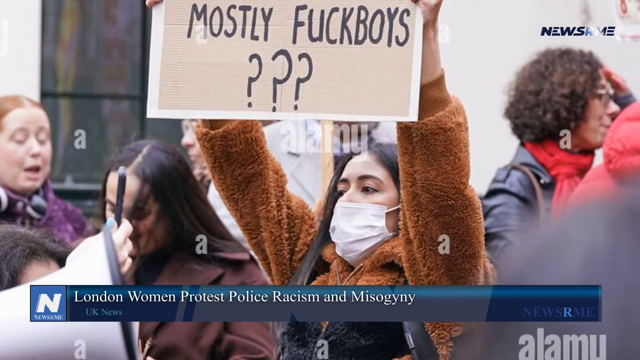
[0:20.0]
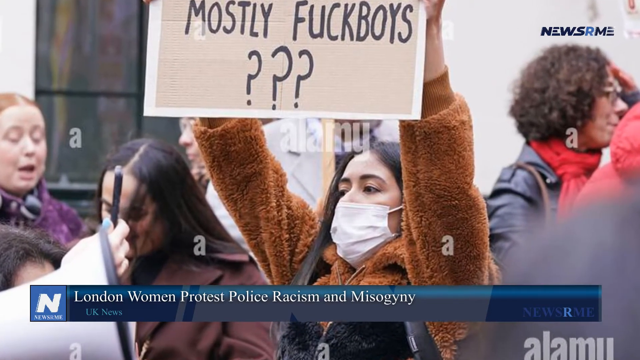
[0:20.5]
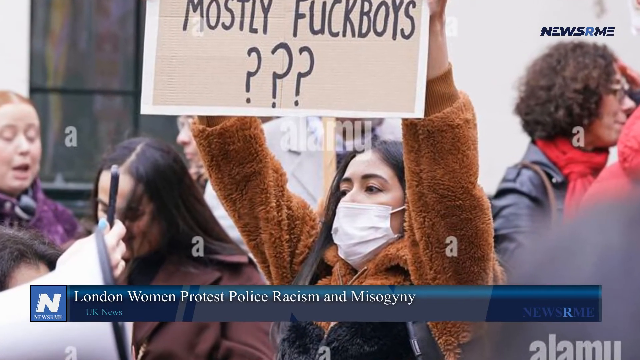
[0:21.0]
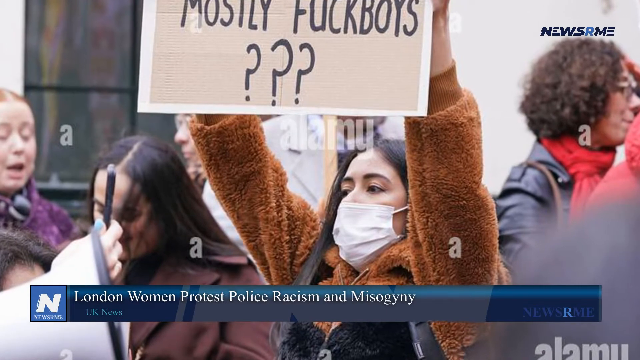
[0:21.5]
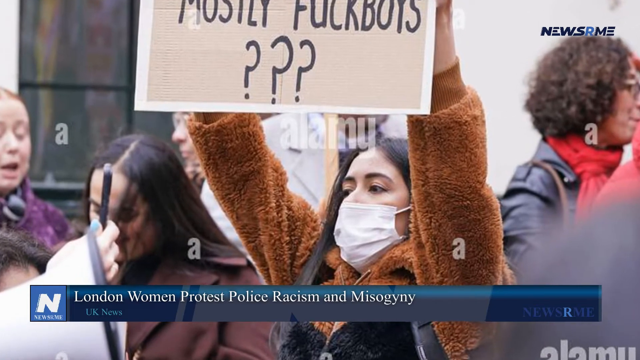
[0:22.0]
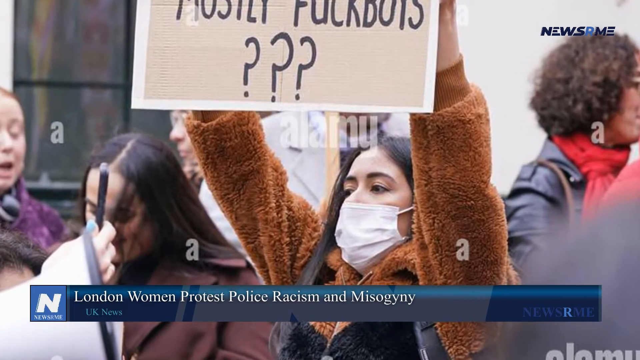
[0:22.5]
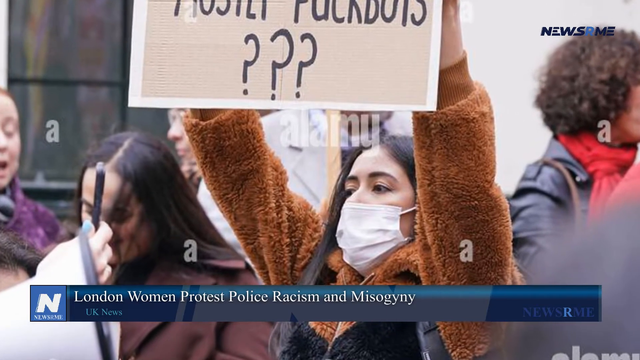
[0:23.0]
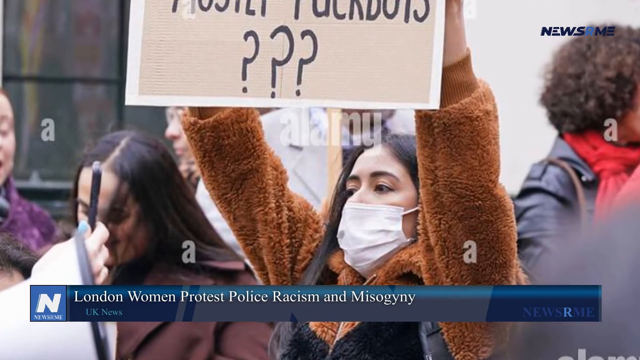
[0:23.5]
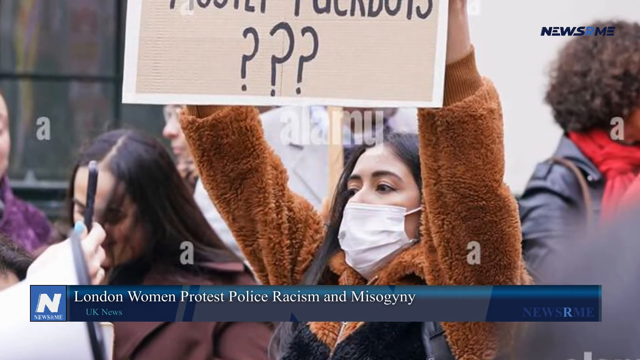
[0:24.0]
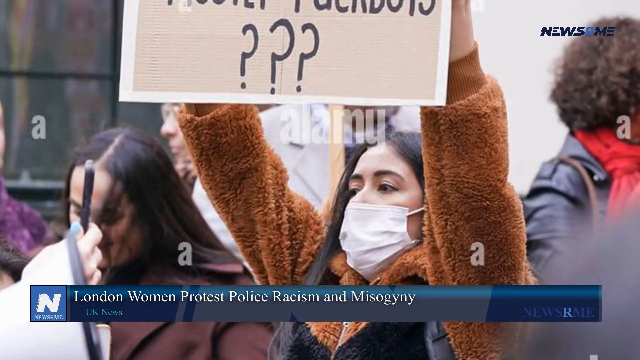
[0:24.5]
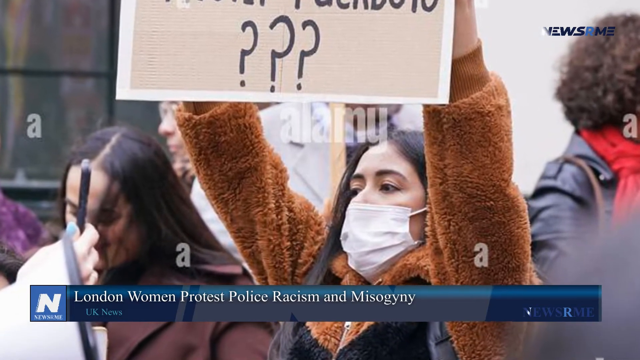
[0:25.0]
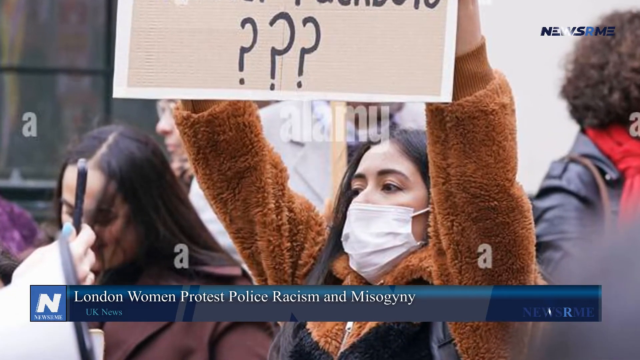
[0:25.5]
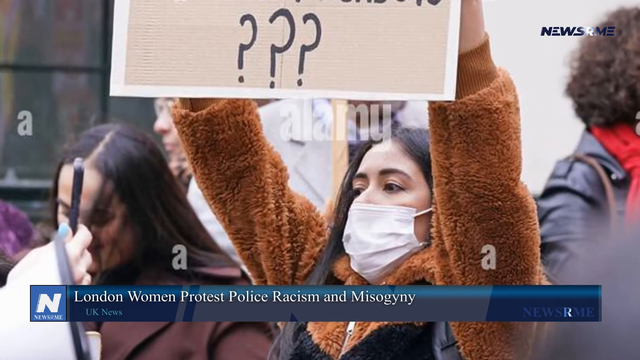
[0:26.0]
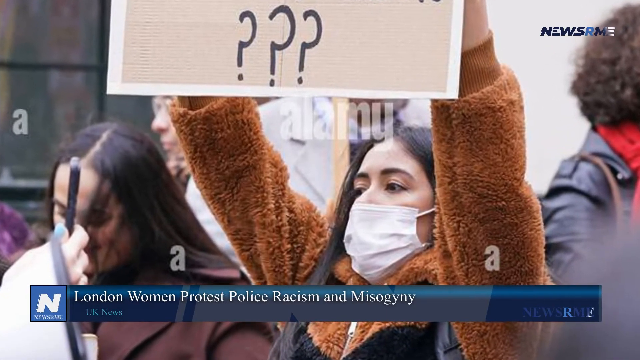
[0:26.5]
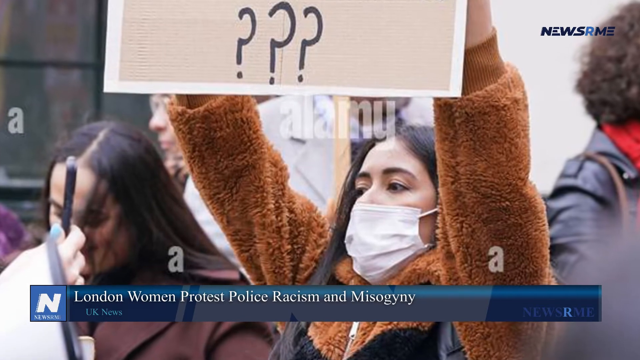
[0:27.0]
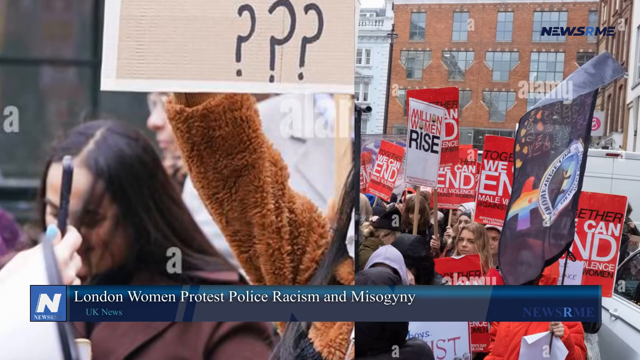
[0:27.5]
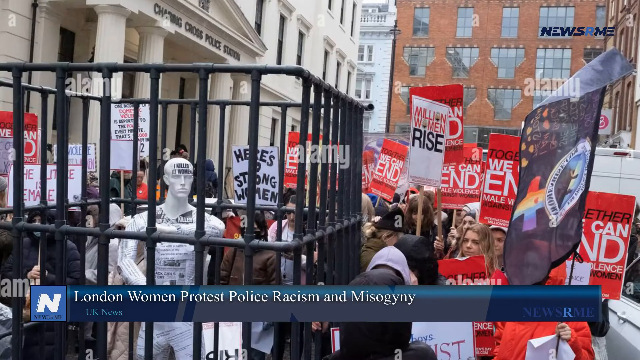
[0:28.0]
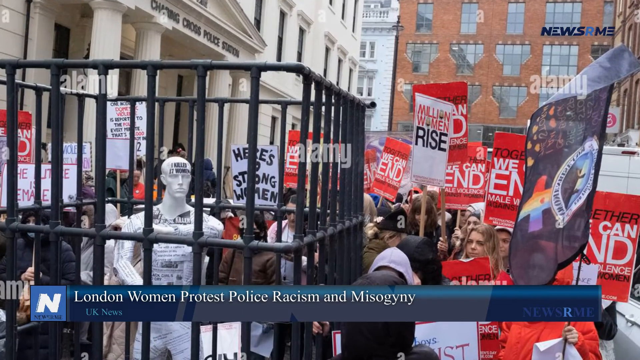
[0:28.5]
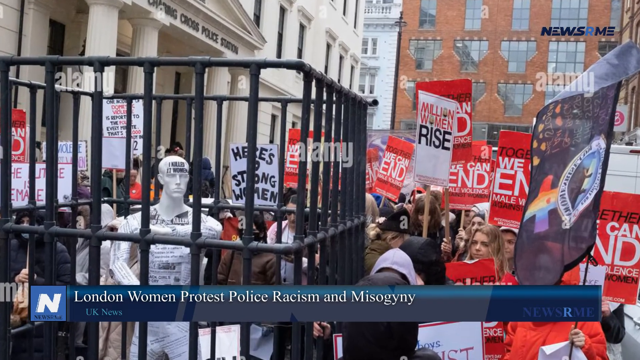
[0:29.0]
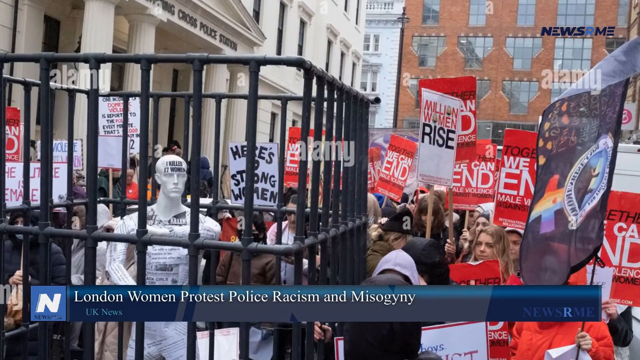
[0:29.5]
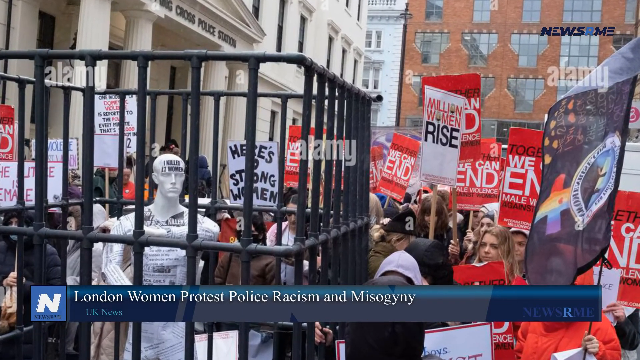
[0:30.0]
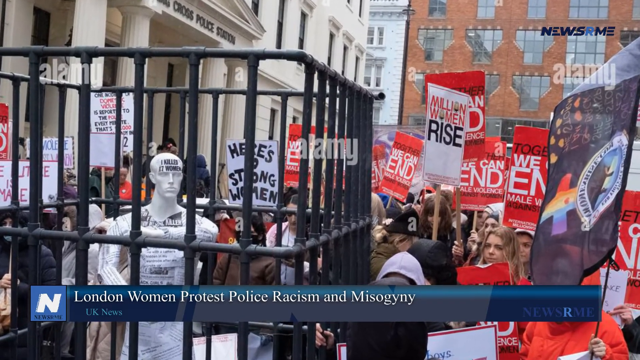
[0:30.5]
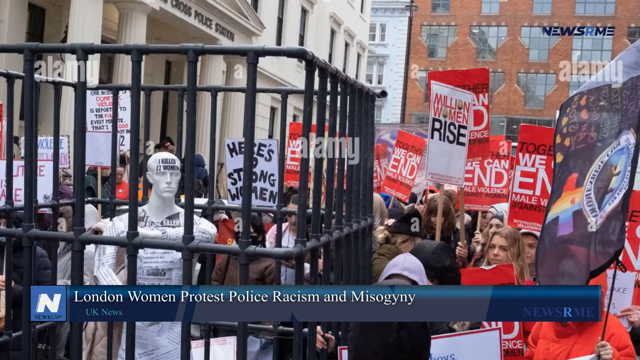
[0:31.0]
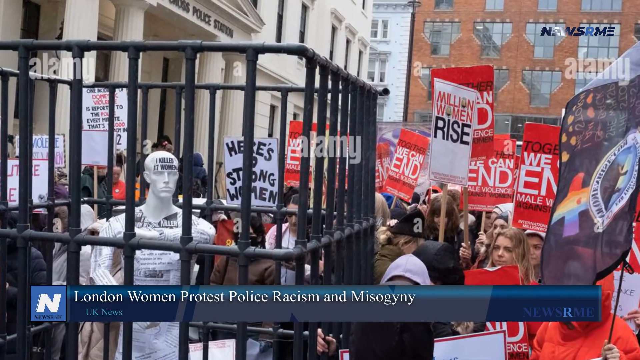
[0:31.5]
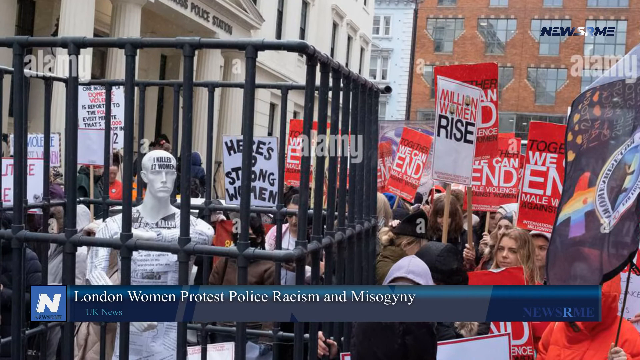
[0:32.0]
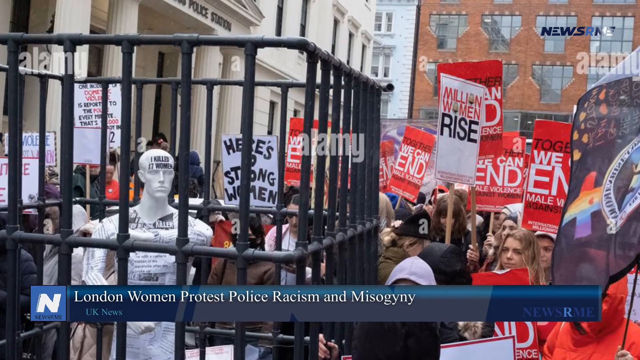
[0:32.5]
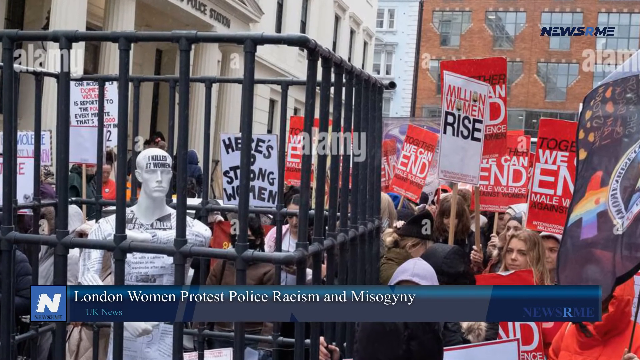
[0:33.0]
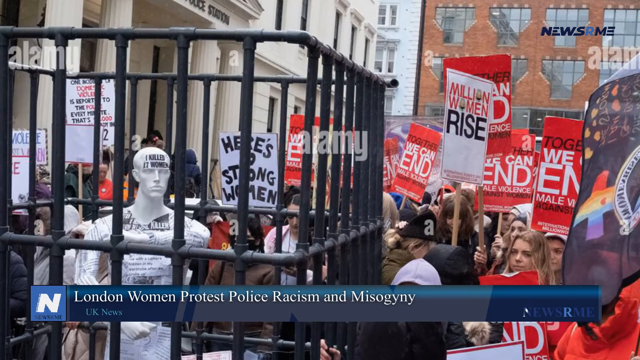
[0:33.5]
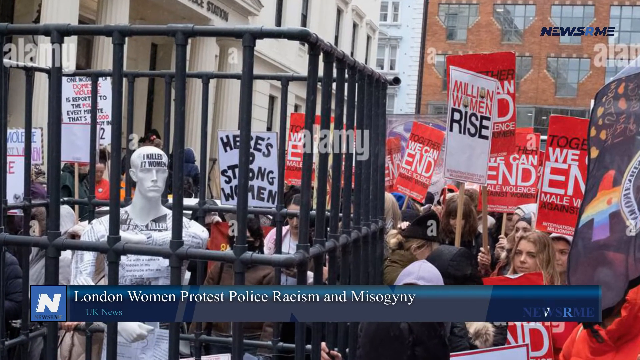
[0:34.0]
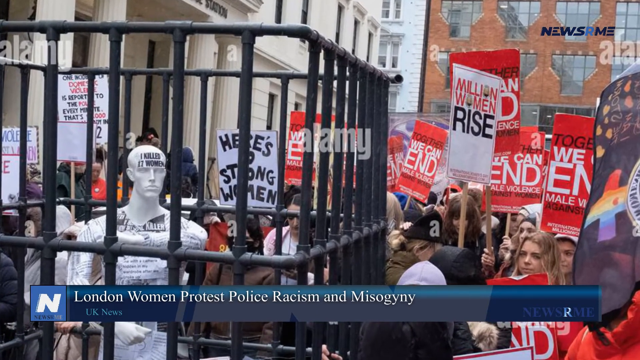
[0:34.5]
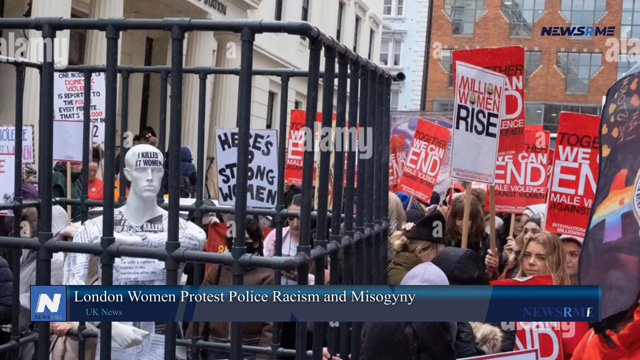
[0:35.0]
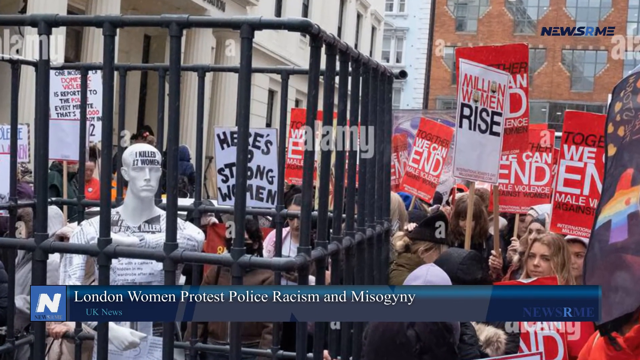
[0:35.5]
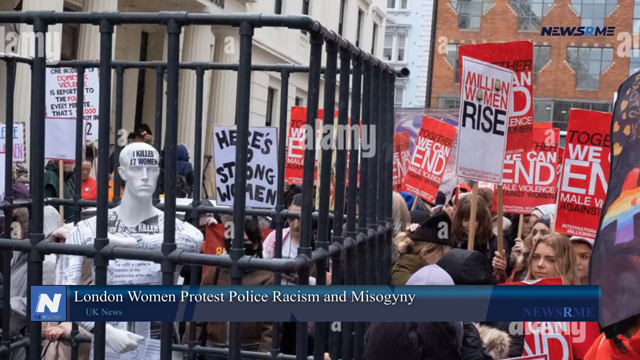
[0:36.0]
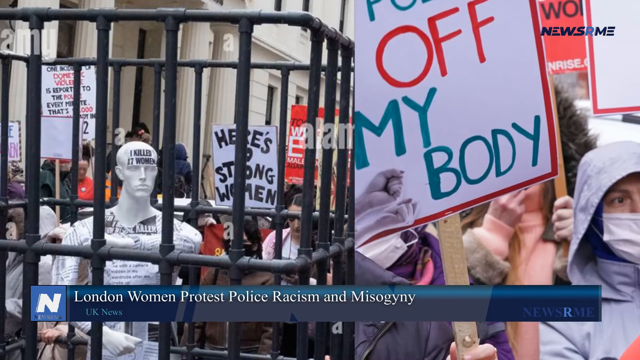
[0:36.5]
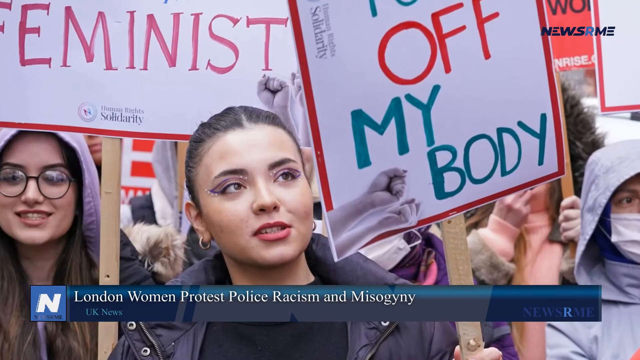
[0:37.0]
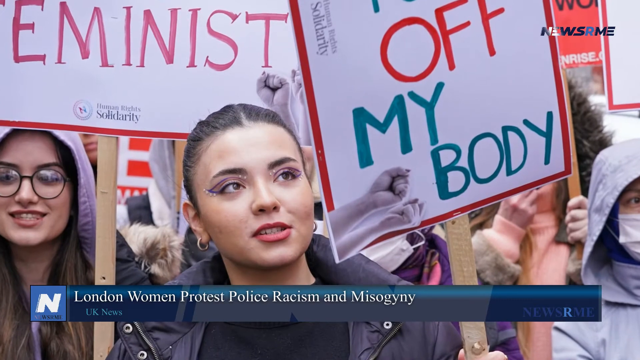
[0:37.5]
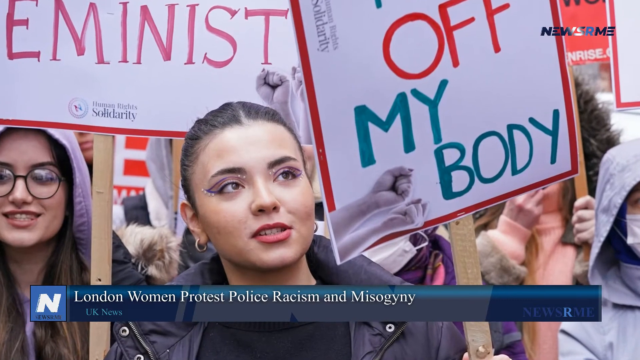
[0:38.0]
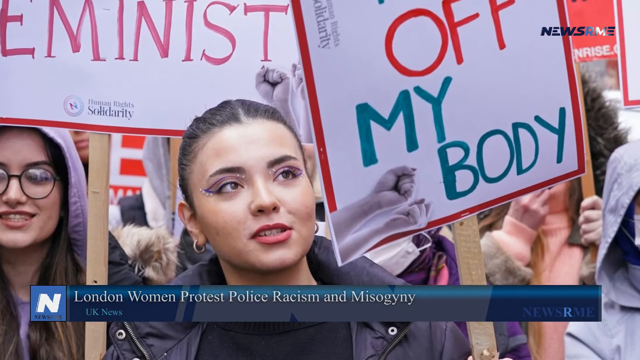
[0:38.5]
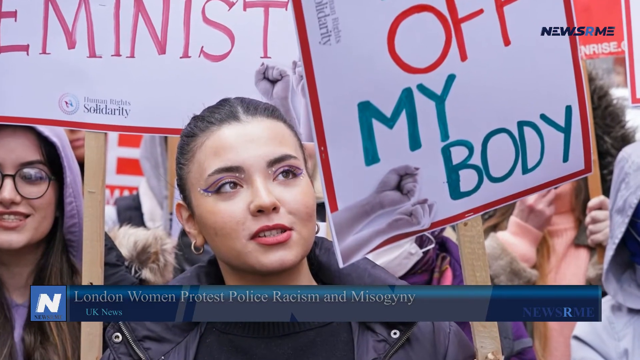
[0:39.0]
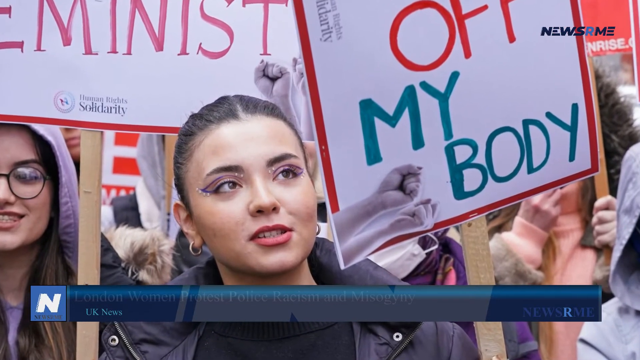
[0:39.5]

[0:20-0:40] The series of still images of the women's protest continues. At the bottom is an "N" on the left and a blue banner with white text reading "London women protest police racism and misogyny." Women in crowds on a street wear jackets and hold up signs. The first image shows a woman wearing a medical mask and holding a sign with a tan background; not all of the message is visible, but the readable text is "mostly fuck boys" with three question marks below it. The next still image shows women carrying signs reading "million women March," and another message reading "and male," with text below it that cannot be made out, possibly "male misogyny." This second image also shows a cage with a white mannequin inside it, apparently with writing on it.